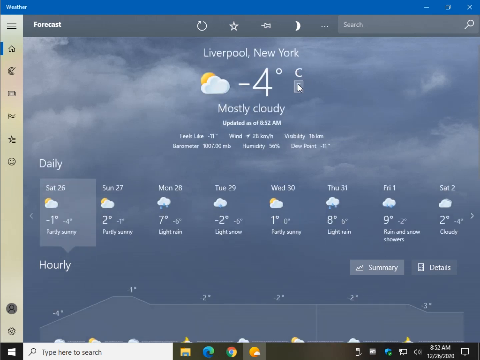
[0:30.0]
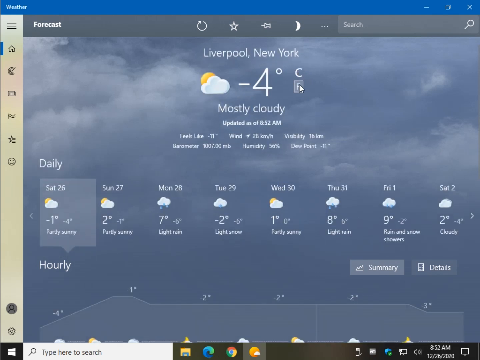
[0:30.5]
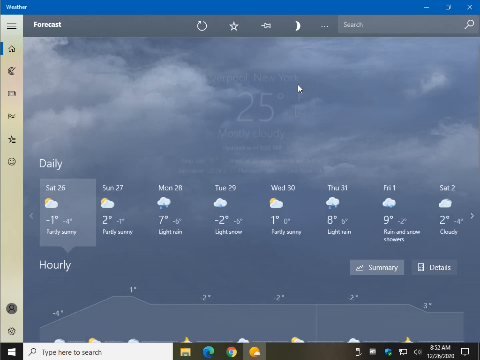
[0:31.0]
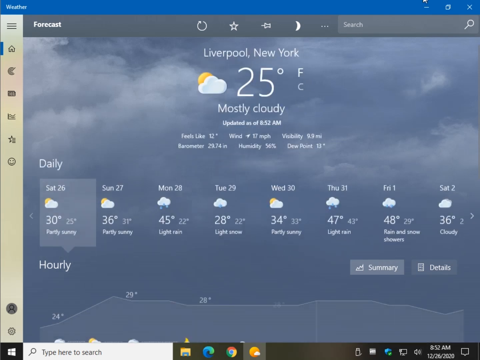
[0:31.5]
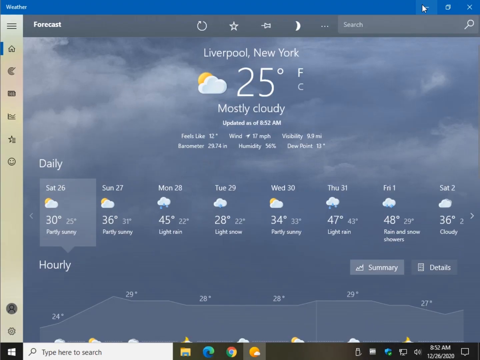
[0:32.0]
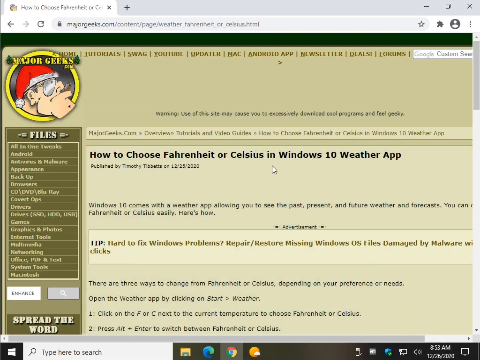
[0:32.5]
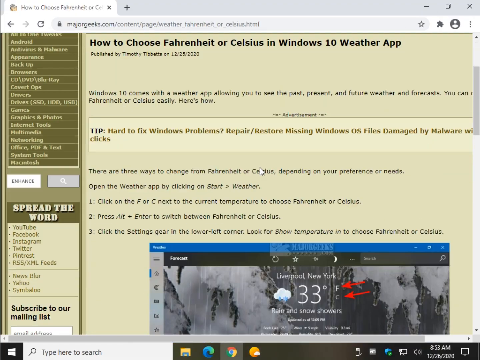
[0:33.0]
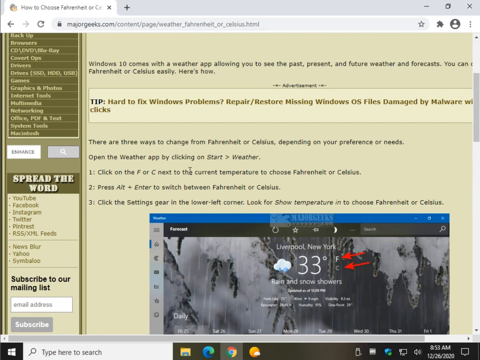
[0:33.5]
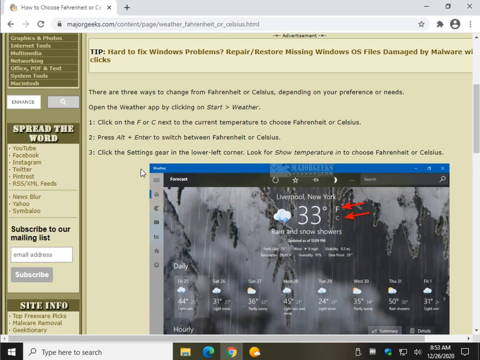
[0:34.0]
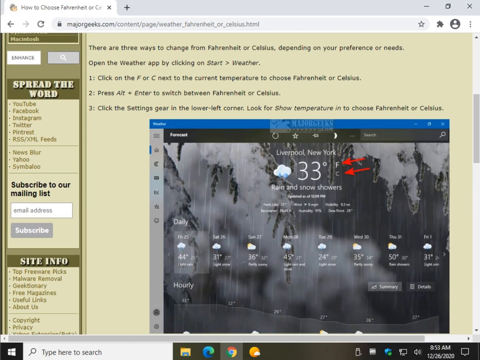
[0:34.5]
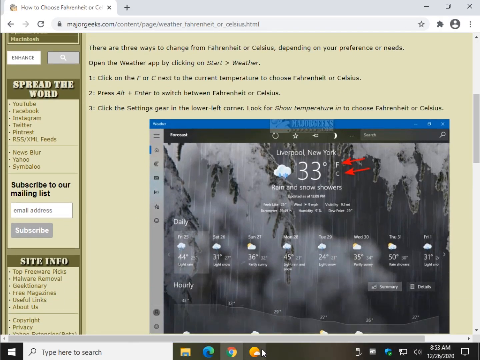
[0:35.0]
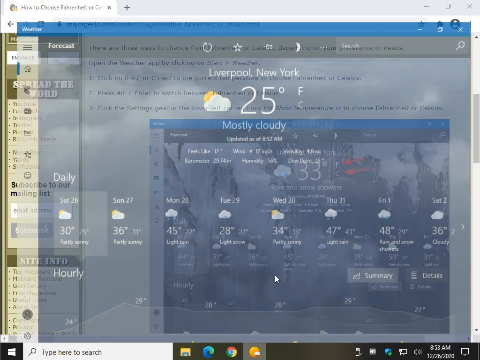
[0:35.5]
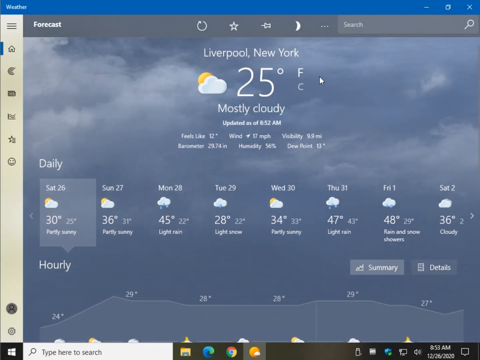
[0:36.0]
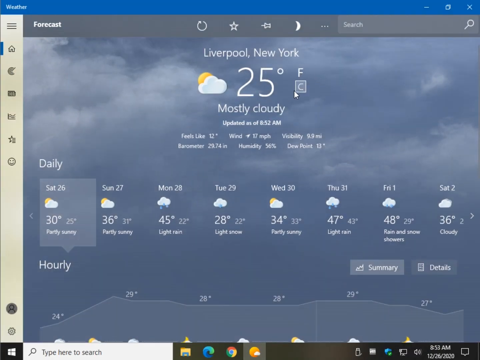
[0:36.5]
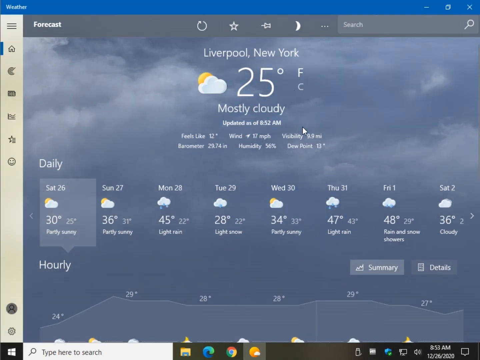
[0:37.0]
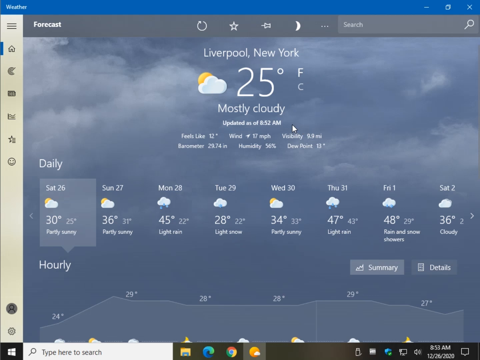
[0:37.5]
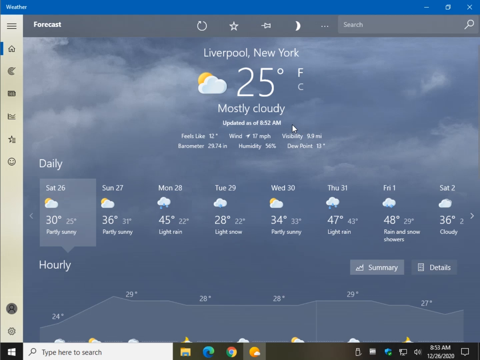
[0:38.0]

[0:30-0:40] A forecast page reads "Liverpool, New York," minus 4 degrees Celsius and mostly cloudy, updated as of 8:52 a.m., feels like minus 11 degrees, wind at 28 miles an hour and visibility of 16 kilometers. Below that is the daily forecast, like a seven-day forecast, covering the 26th through the 2nd. On the 26th the temperature is minus 1 to minus 4, and on the 27th it is 2 to minus 1; the temperatures stay very low on all the days, in single digits or negative numbers. The video then goes back to Major Geeks and scrolls down to look through the settings for the temperature controls in the weather app.